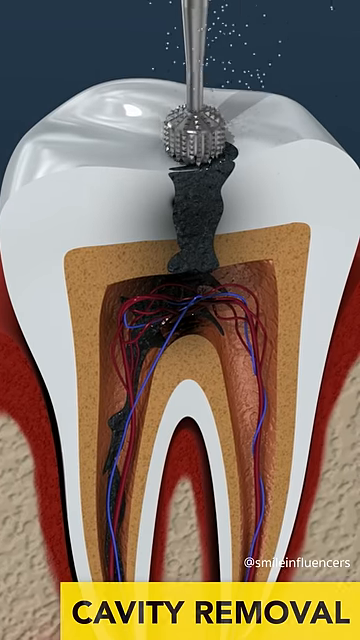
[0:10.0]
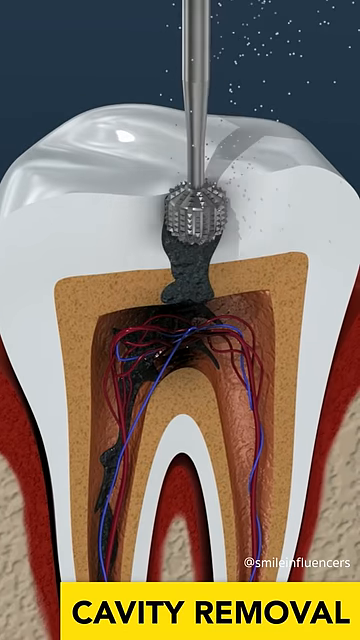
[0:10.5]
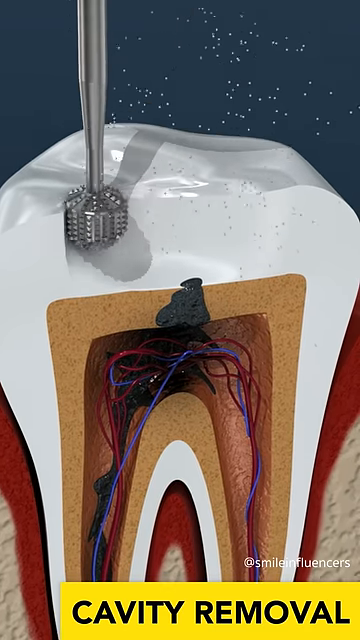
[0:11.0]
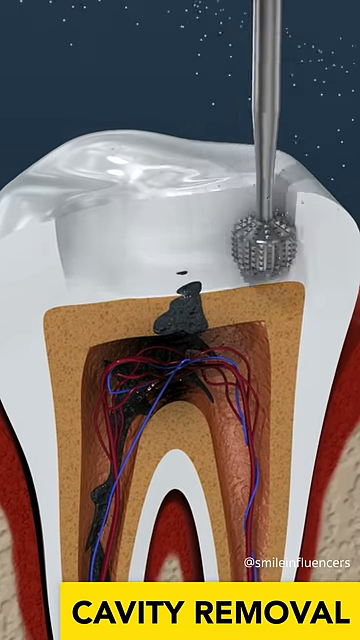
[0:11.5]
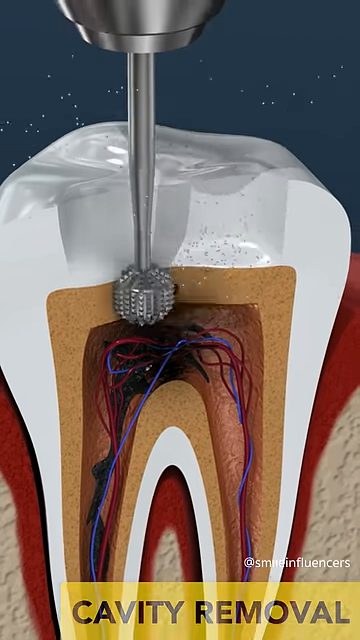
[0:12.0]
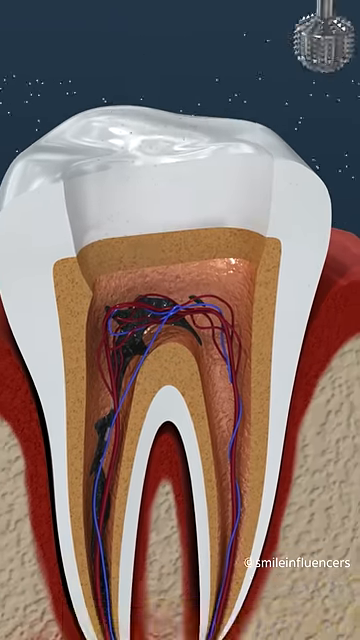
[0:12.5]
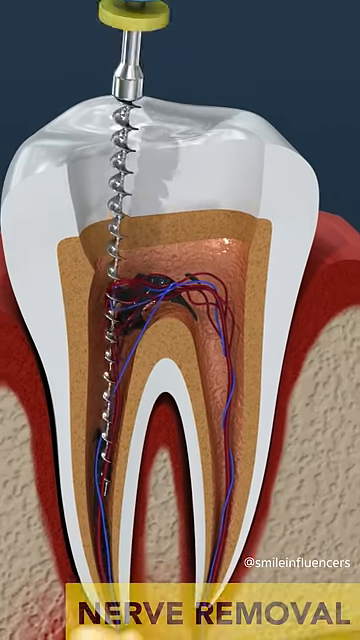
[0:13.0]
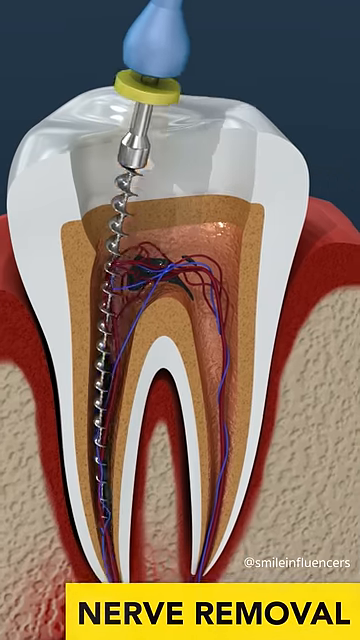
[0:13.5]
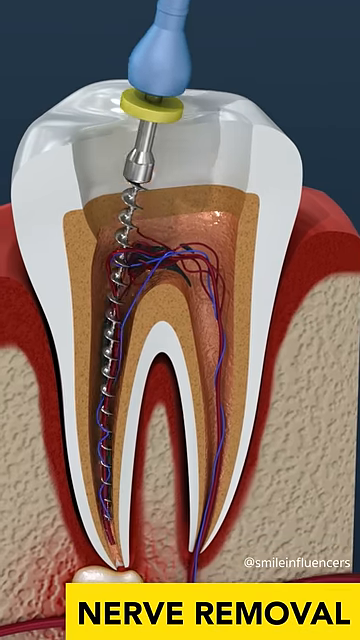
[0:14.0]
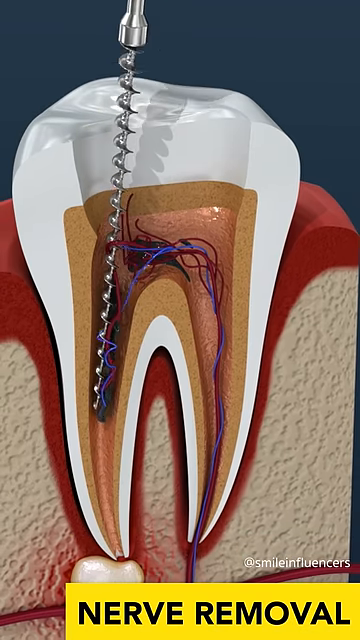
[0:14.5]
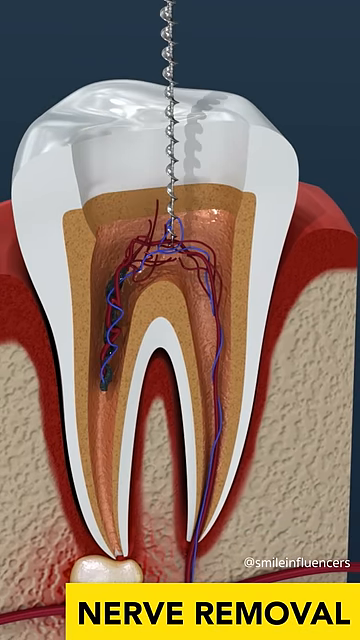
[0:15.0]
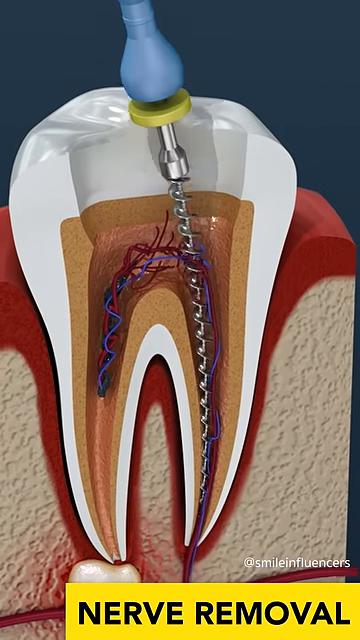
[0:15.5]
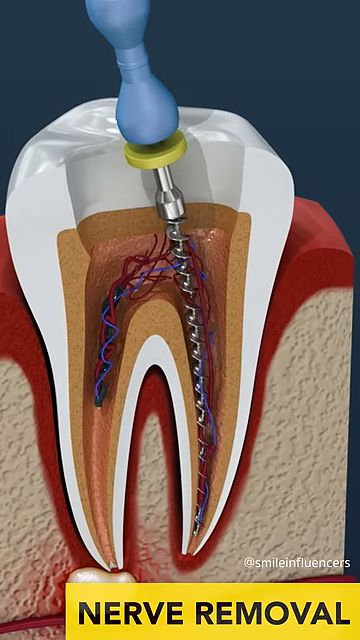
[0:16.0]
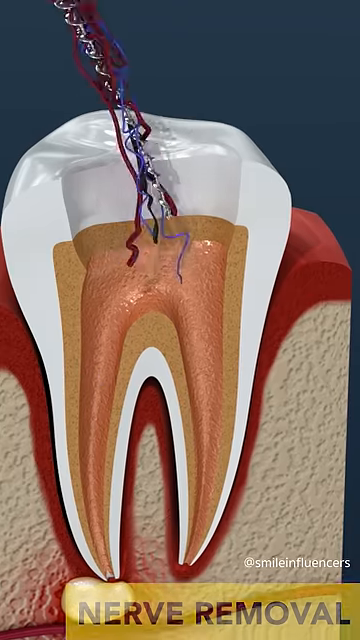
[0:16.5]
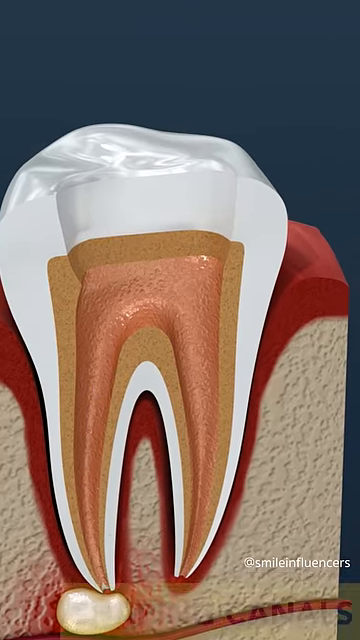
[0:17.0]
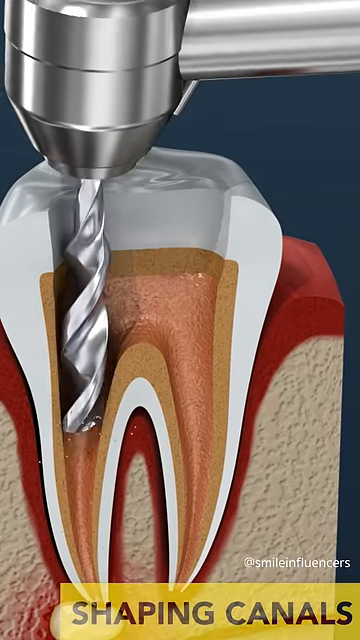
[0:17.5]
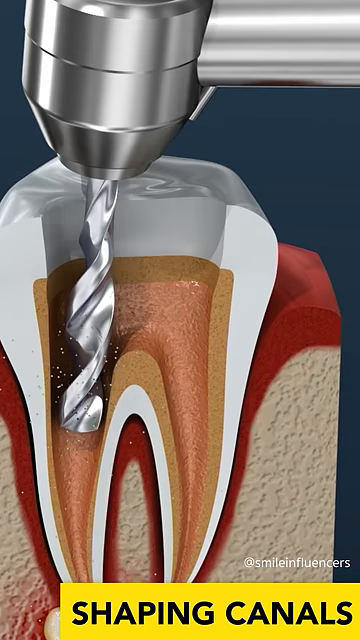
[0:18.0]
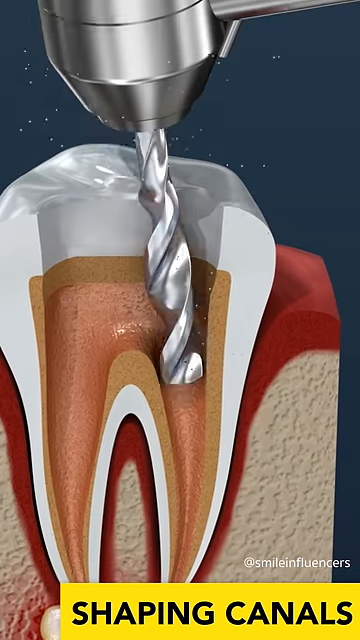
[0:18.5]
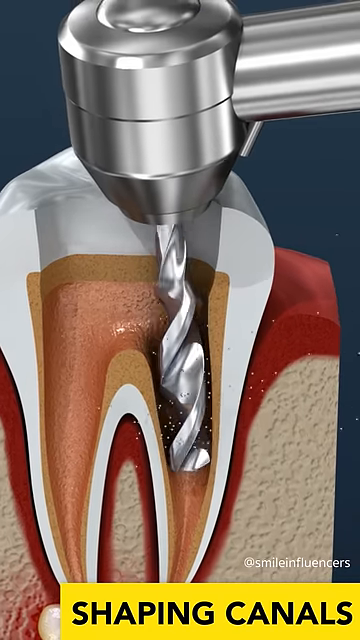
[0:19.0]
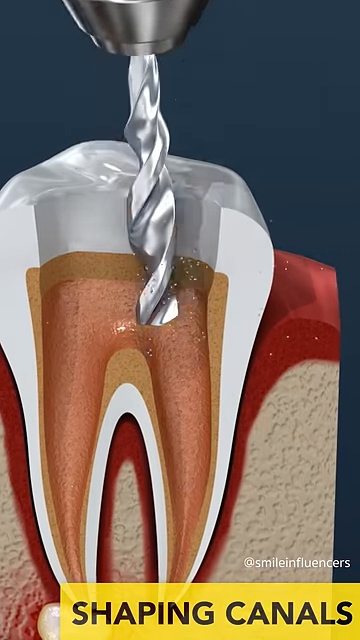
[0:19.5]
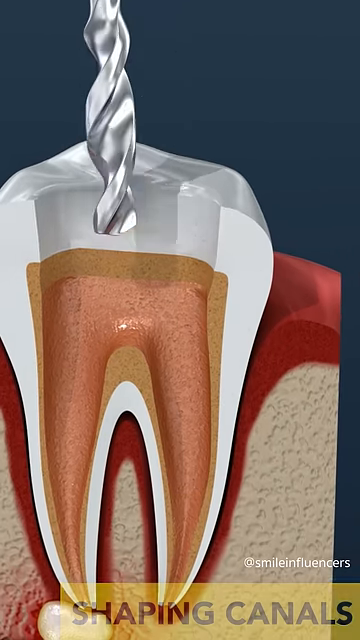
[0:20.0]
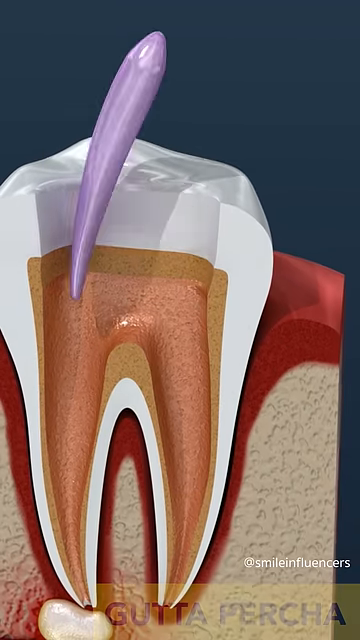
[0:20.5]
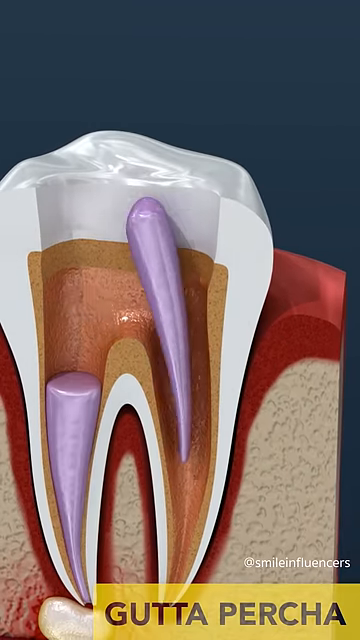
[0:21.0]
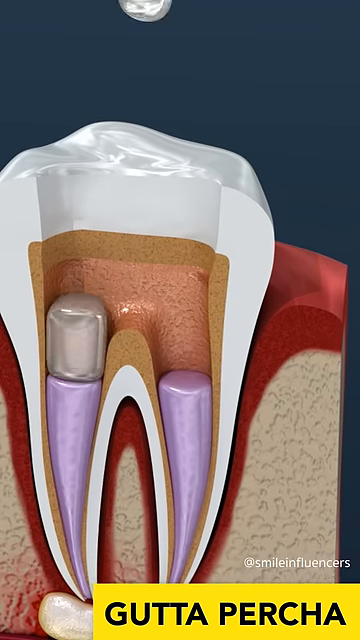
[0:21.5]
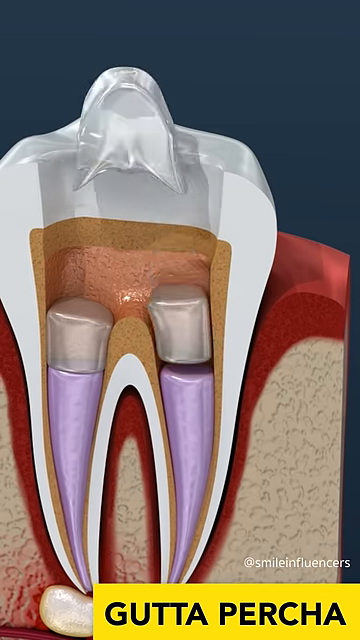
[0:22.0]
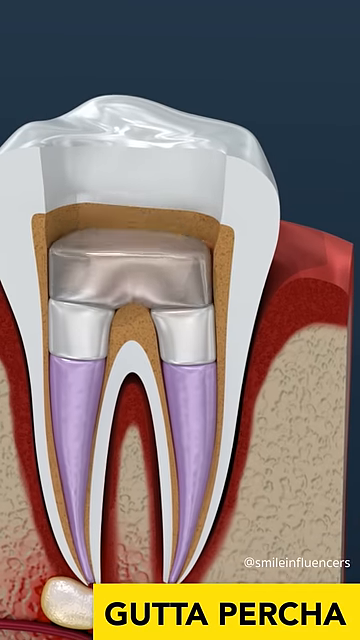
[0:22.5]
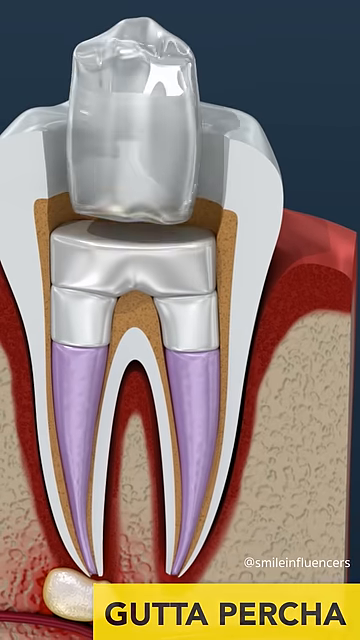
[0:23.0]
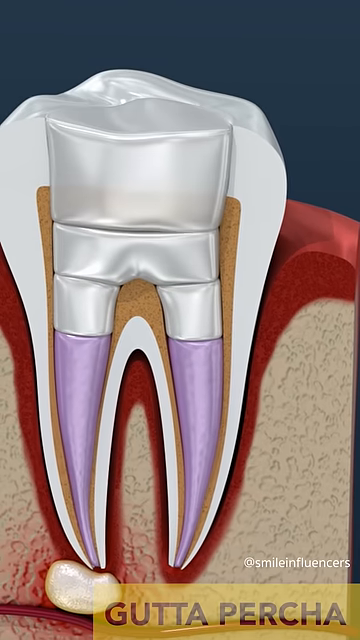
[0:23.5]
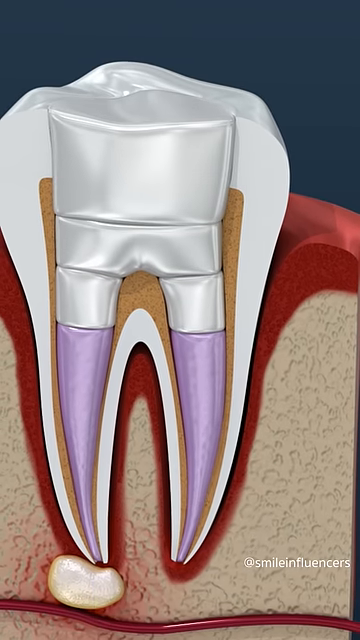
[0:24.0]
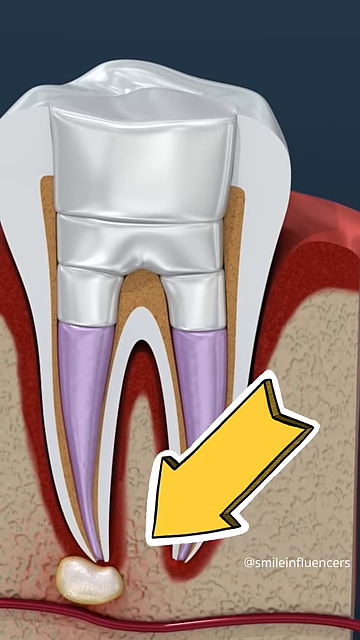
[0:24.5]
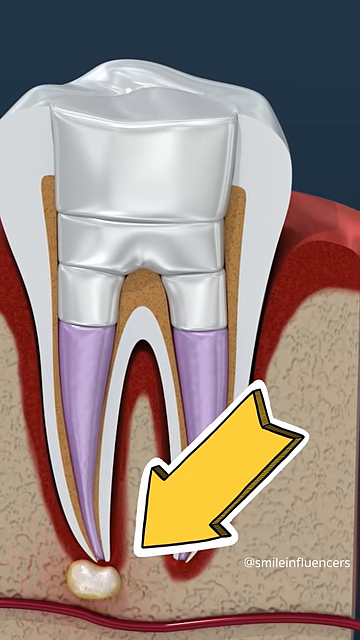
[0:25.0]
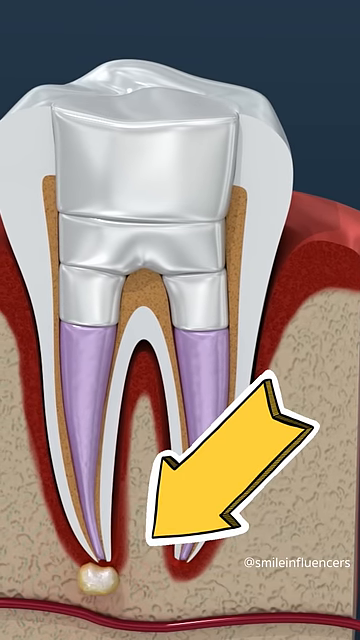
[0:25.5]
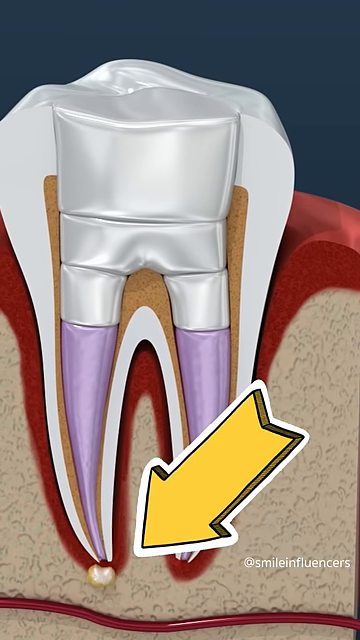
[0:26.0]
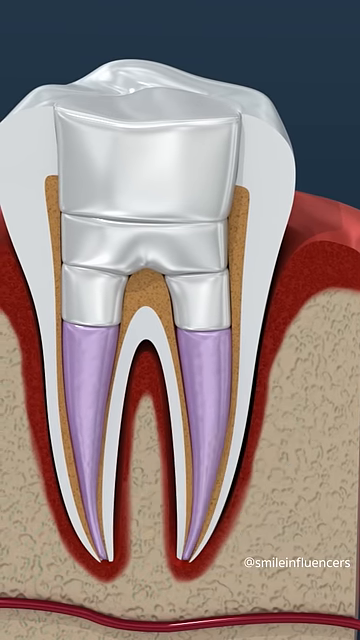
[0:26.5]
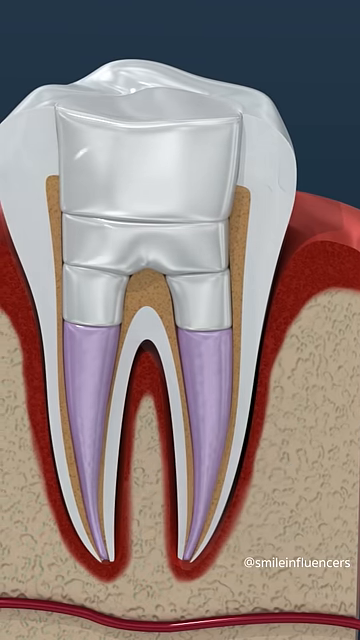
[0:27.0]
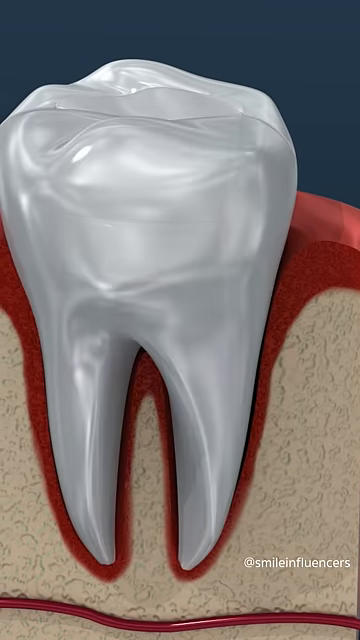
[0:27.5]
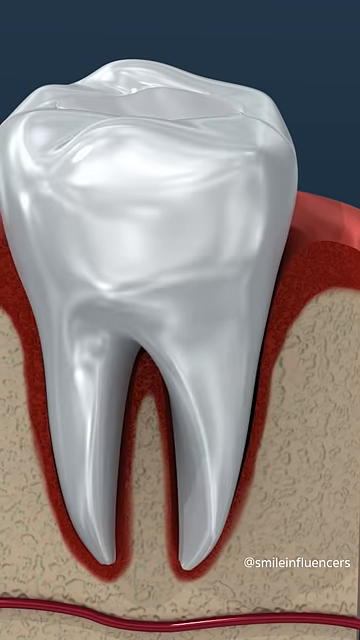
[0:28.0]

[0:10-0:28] The video is from smile influencers. At the top, a drill appears, kind of a circular cylinder with little bumps all over it, apparently stainless steel. It goes into the cavity area, which is a kind of blacker area on the tooth, and as it spins and goes down, the whole area is carved out. A long, skinny device then takes the roots out, and another, wider cylinder drill kind of puts in some different pieces. Gutta percha is put in, and something points to the infection as it goes away. The ending shows the tooth all fixed.